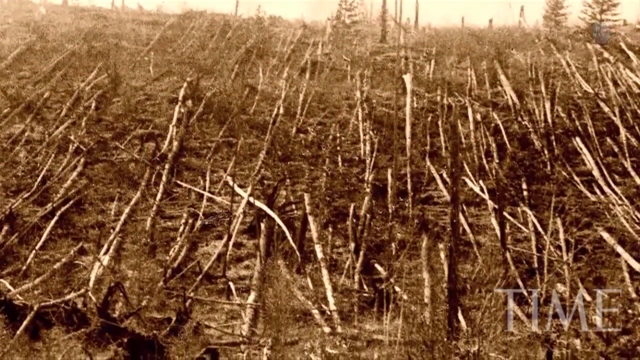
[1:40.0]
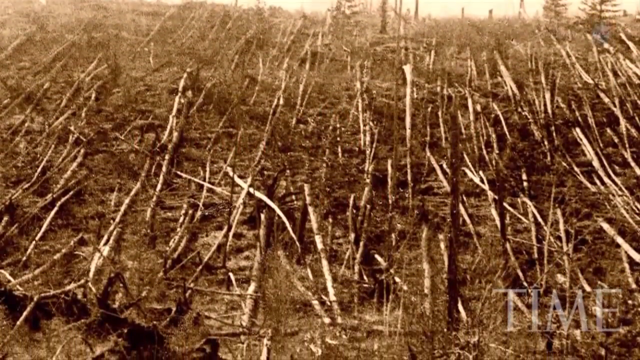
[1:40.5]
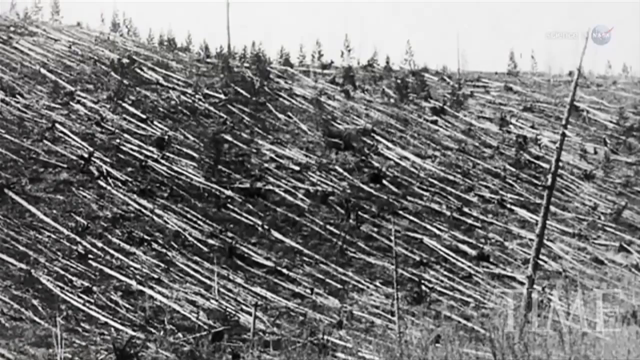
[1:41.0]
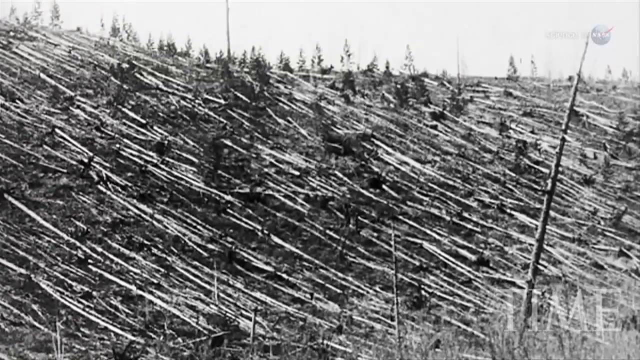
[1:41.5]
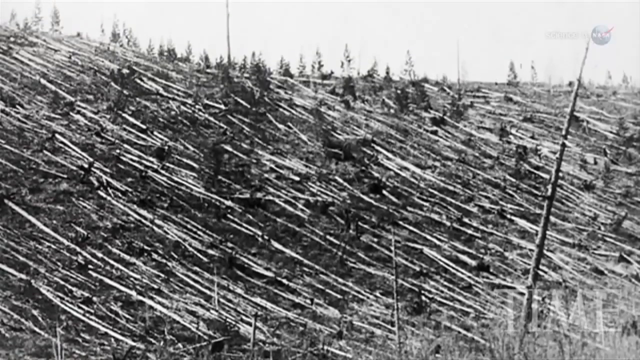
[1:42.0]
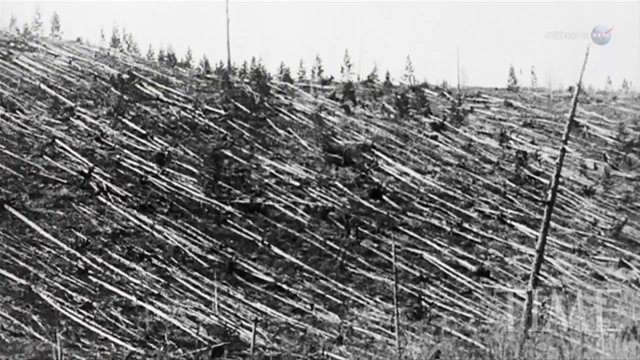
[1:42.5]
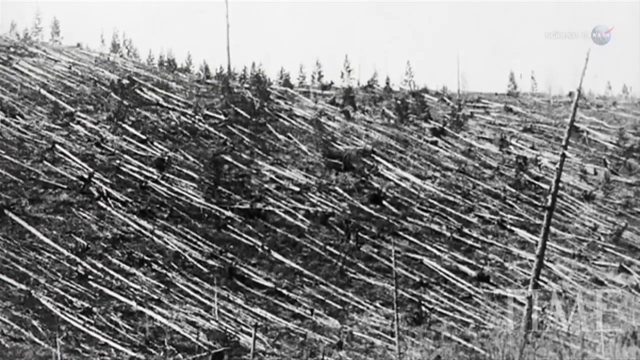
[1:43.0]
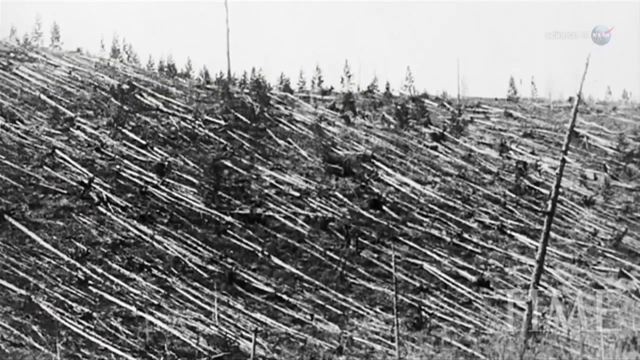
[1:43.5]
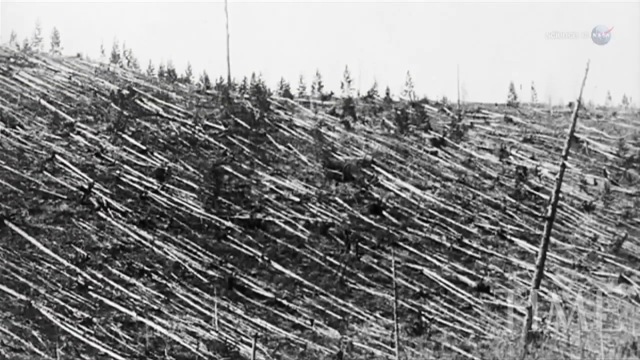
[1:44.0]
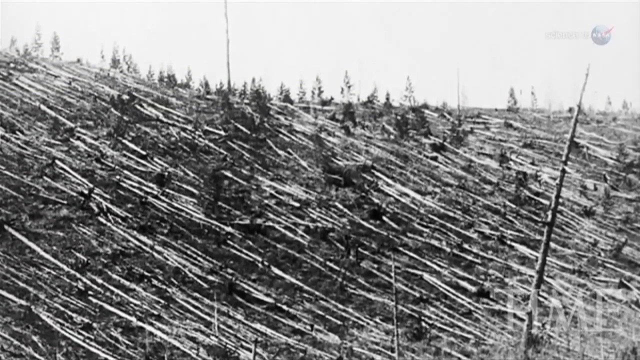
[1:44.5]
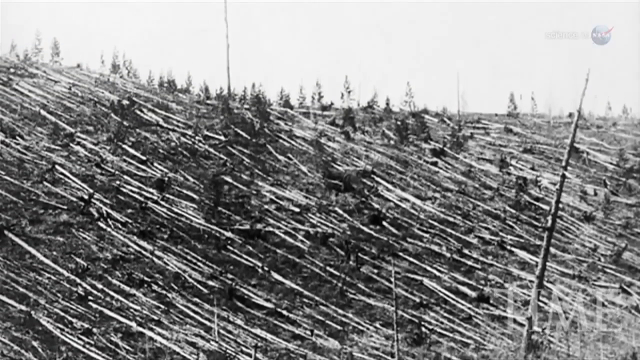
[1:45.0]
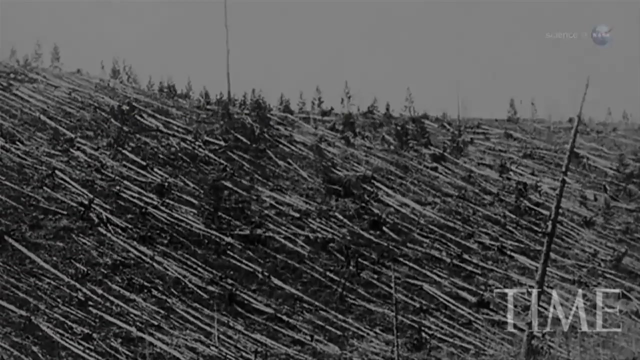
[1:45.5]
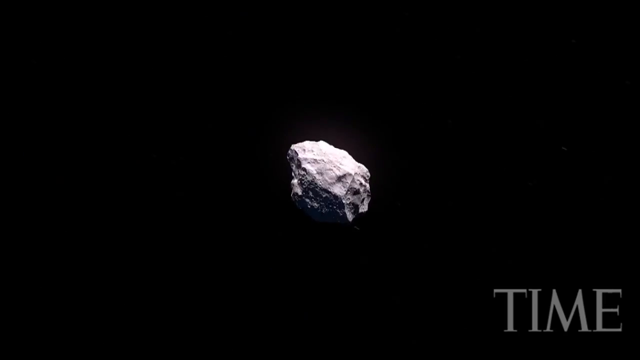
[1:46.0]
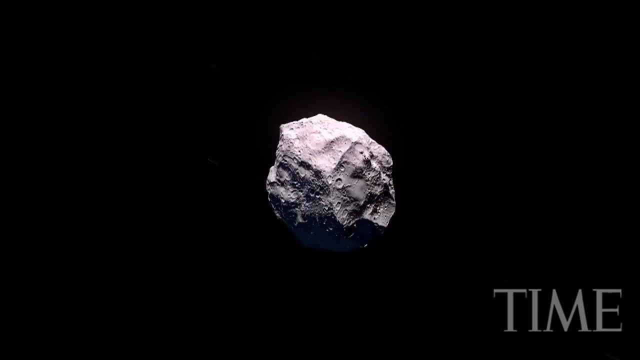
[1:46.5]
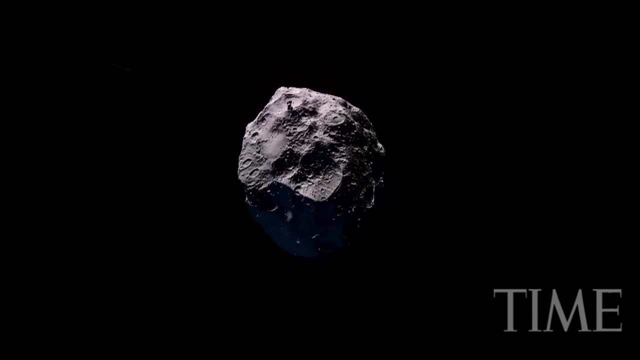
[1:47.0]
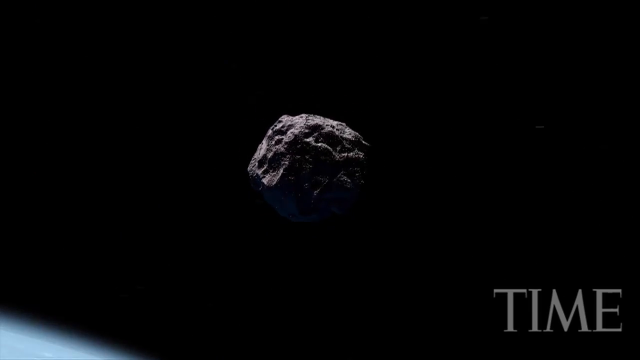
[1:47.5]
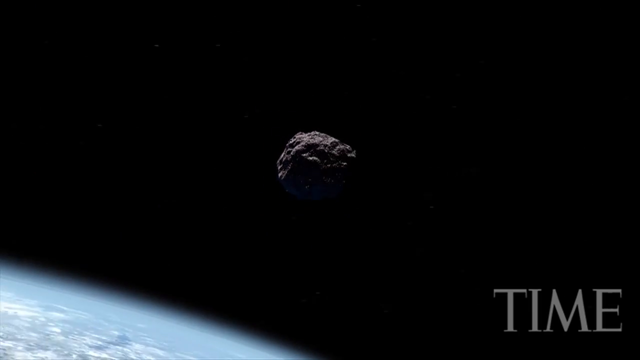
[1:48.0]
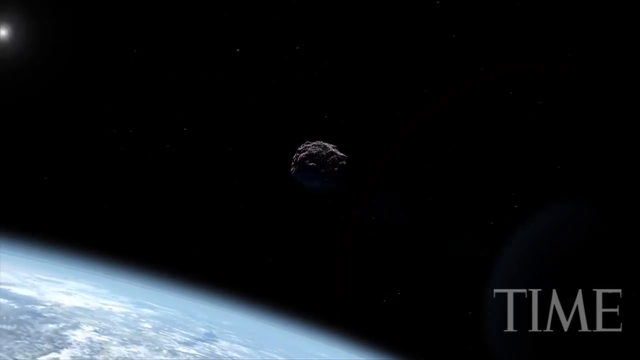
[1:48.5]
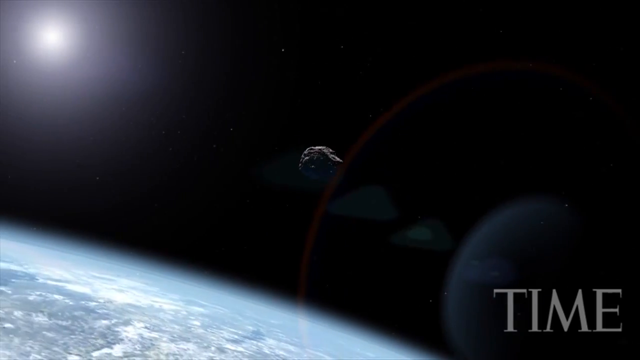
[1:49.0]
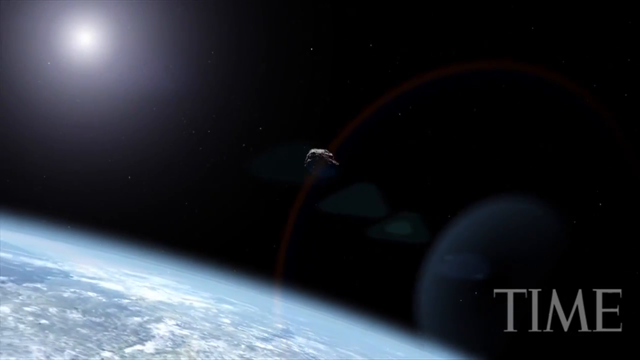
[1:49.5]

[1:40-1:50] An asteroid has struck the Earth in a forested area. All the trees lie over on their sides, flattened outward from the epicenter of the crash for miles around in a huge circular area. The video then transitions to an asteroid floating through space: it moves from the right side of the screen into the center, then slowly rotates as it floats off into the distance toward the sun in the upper left of the screen, with the Earth in the lower left.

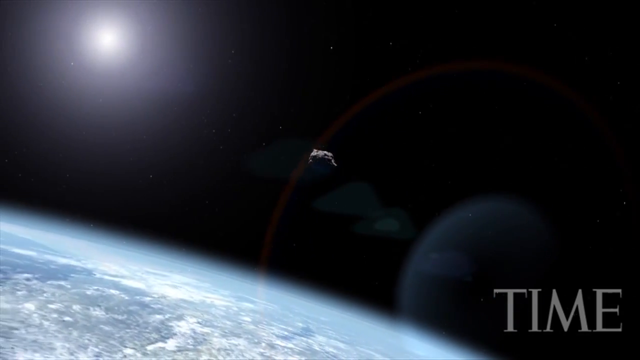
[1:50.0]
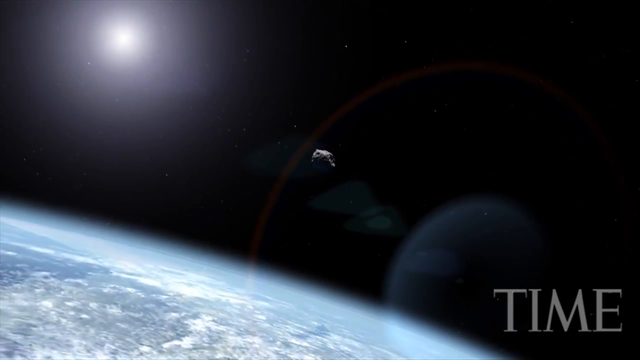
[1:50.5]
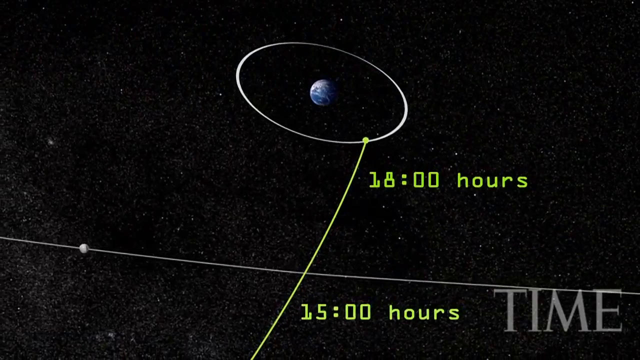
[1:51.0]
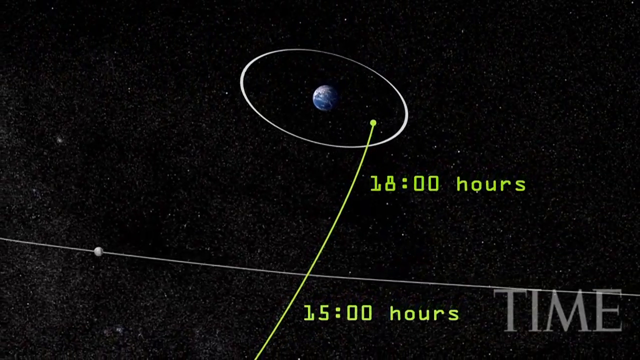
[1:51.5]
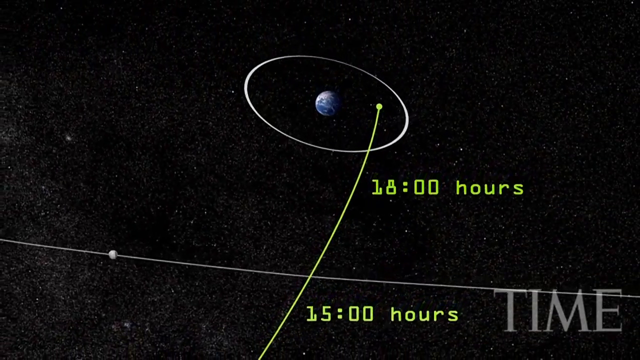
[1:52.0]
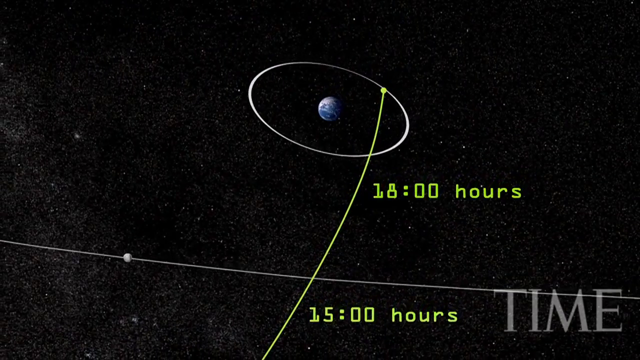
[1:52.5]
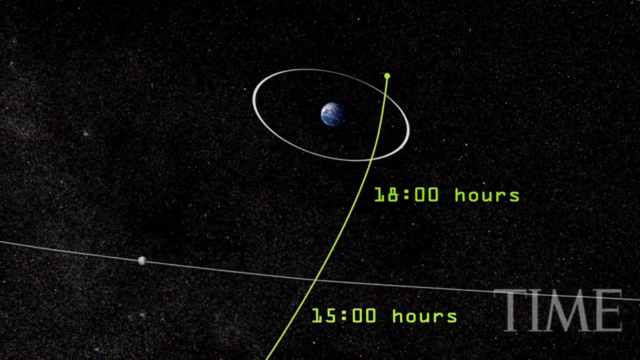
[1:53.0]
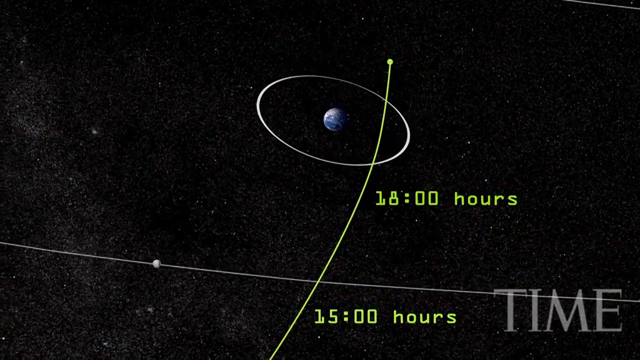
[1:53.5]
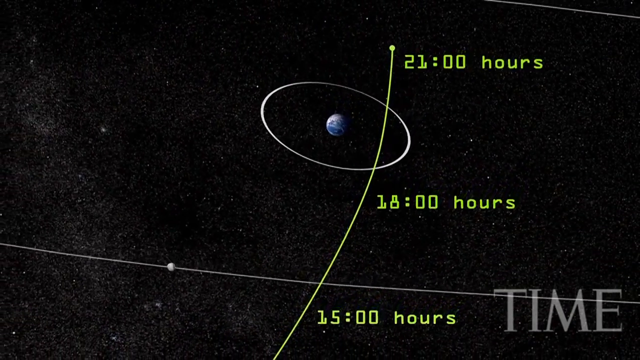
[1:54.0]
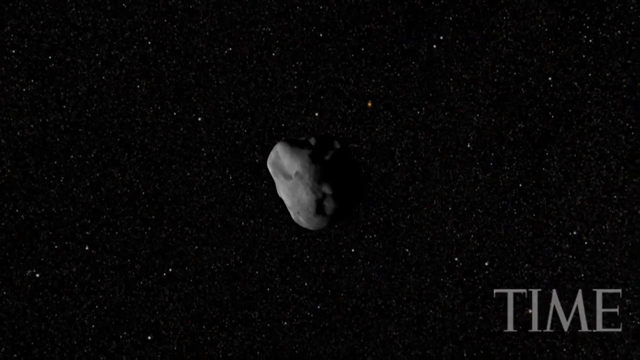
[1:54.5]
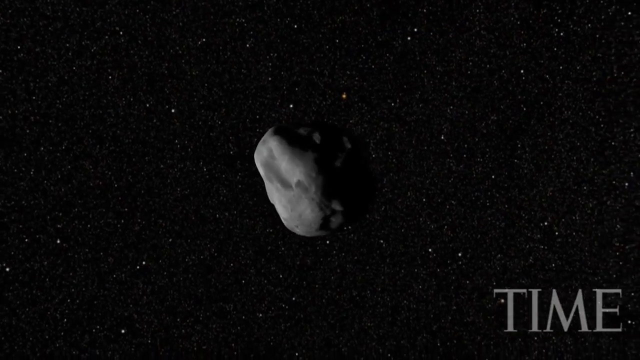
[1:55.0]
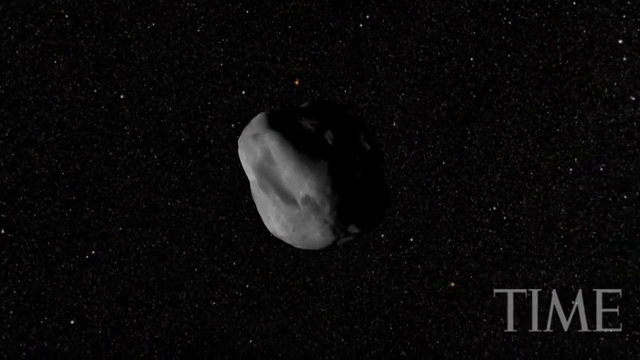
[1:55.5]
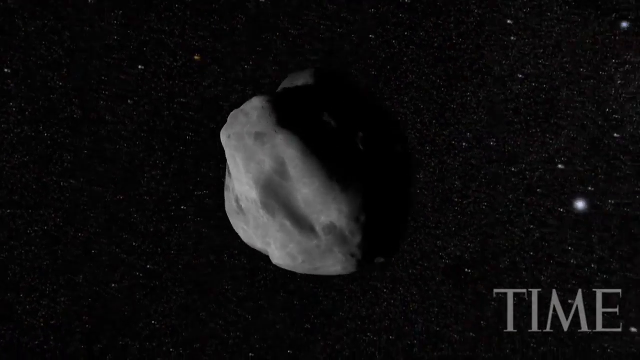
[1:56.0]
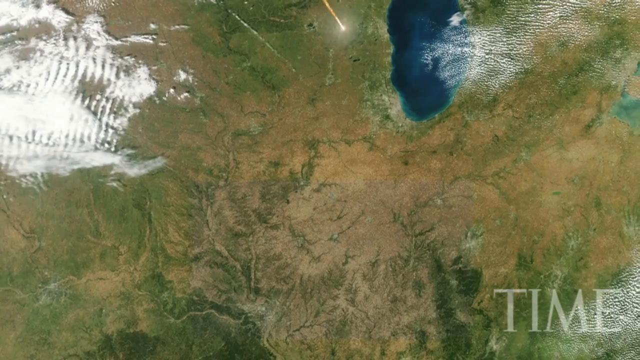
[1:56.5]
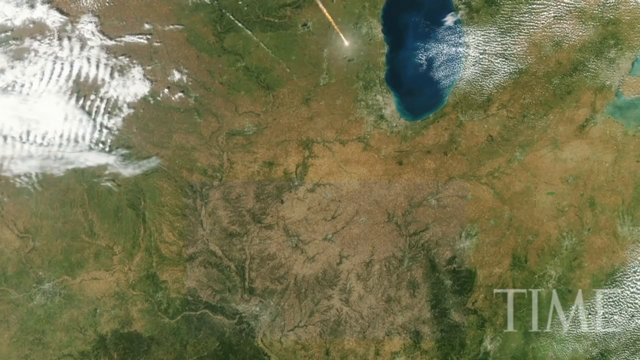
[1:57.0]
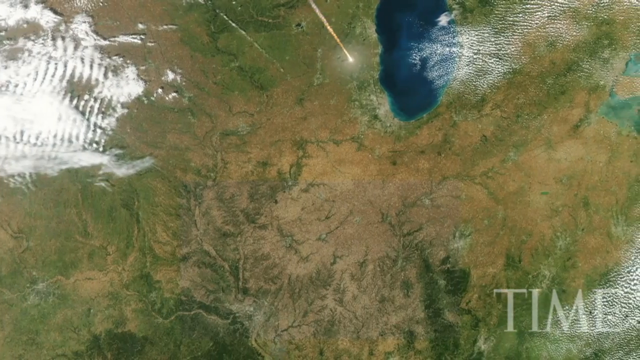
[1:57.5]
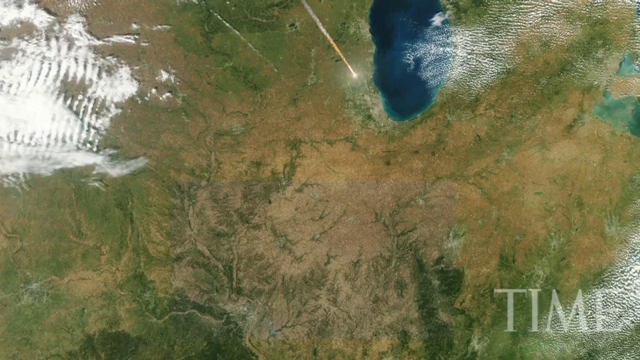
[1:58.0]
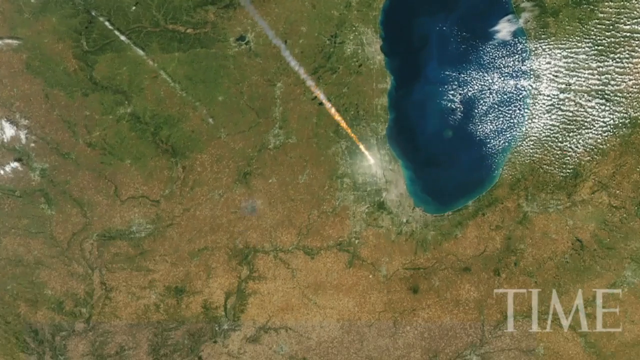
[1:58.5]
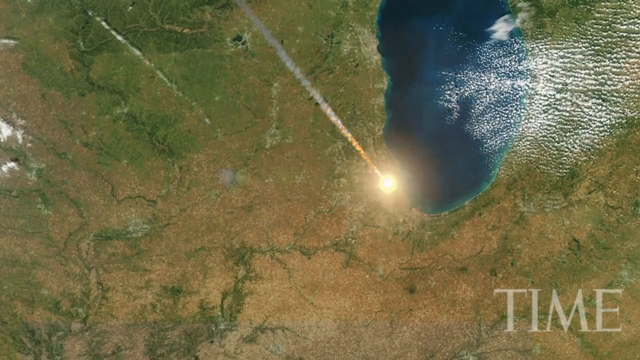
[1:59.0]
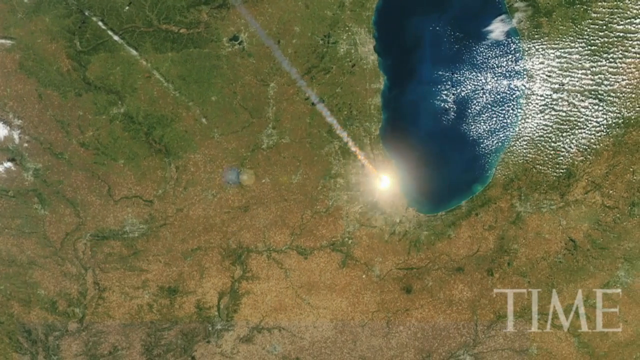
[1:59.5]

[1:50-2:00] An asteroid floats through space; it is large and in all different shades of gray. At one point it floats in the center of the frame, with the sun off to the upper left and the Earth to the lower left. The video then transitions to a graphic of a larger asteroid slowly turning in circles as it floats toward the viewer. Next, an asteroid flies down from space and strikes the Earth, looking like a large fireball coming from the upper left center of the screen down into the very center, where it strikes Earth in a great big fireball.